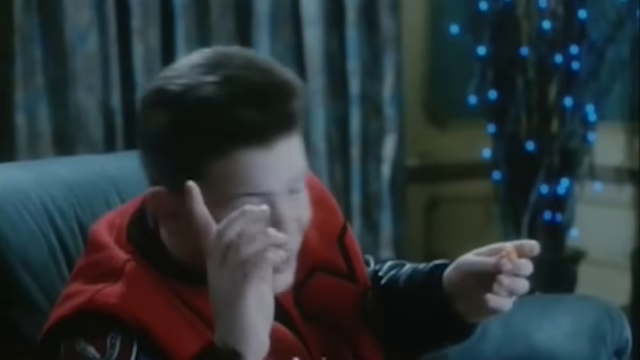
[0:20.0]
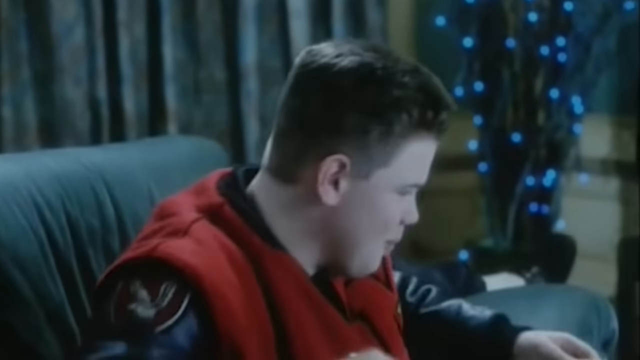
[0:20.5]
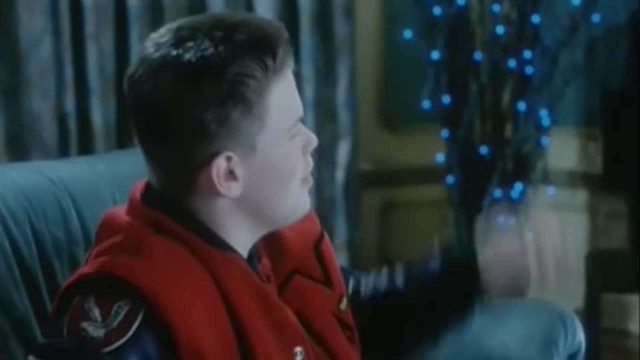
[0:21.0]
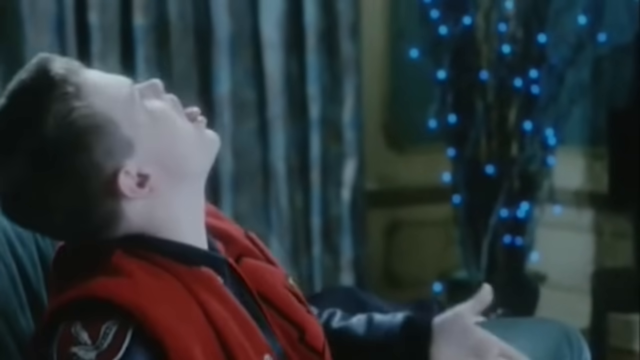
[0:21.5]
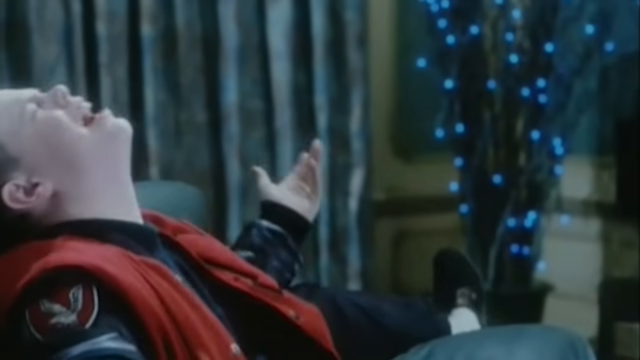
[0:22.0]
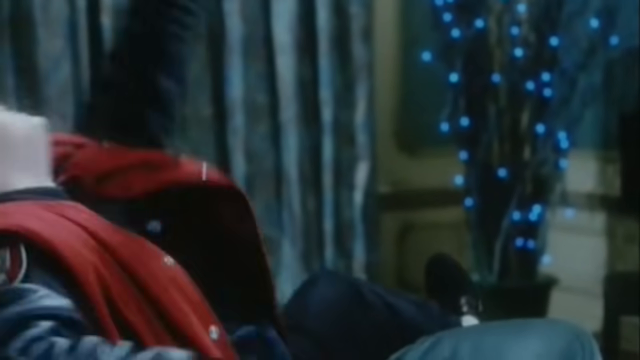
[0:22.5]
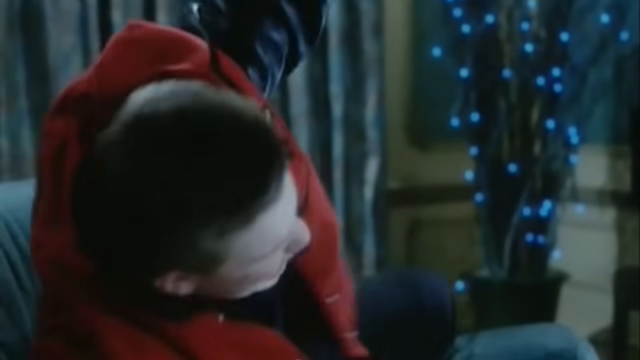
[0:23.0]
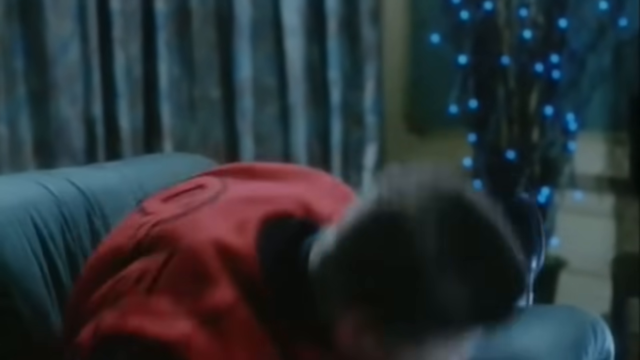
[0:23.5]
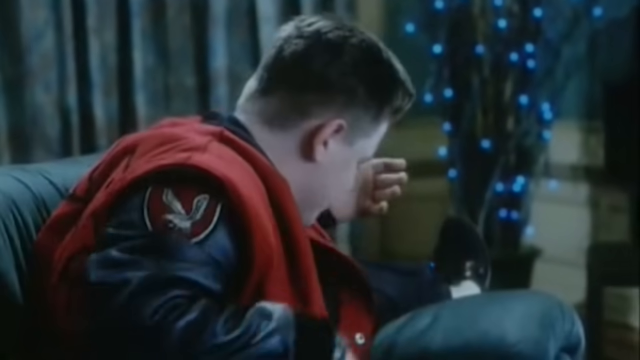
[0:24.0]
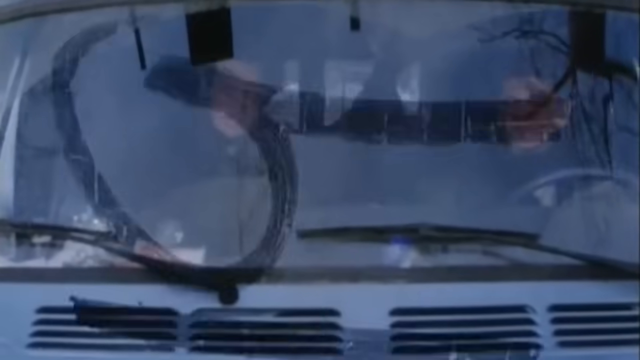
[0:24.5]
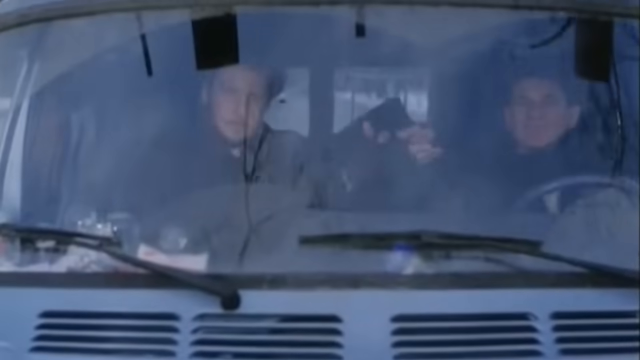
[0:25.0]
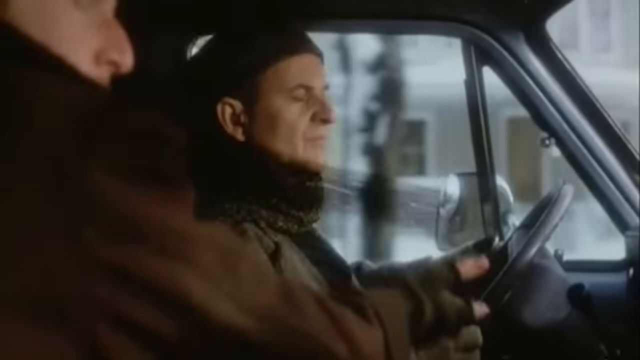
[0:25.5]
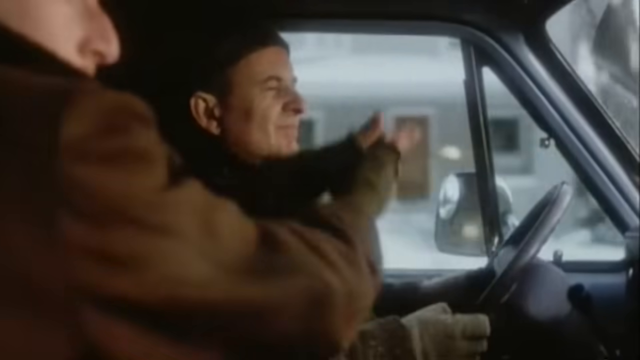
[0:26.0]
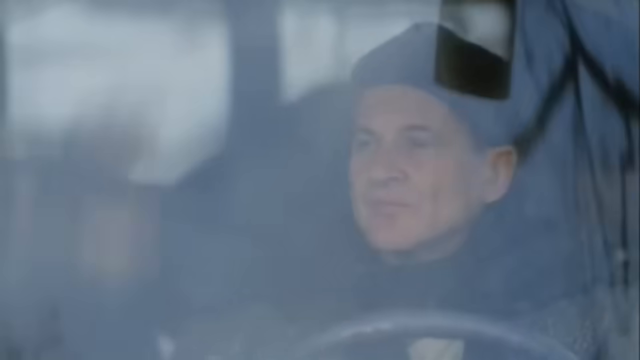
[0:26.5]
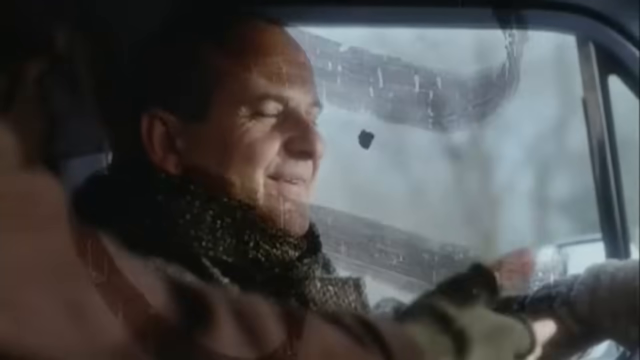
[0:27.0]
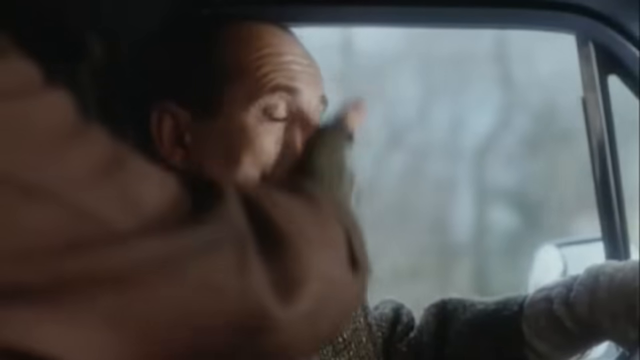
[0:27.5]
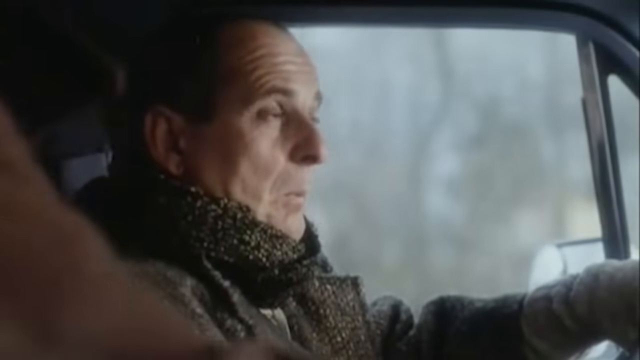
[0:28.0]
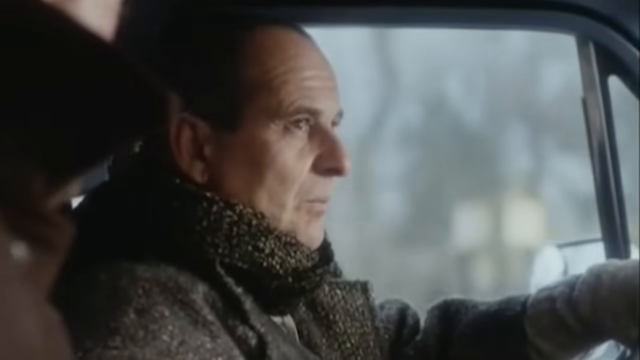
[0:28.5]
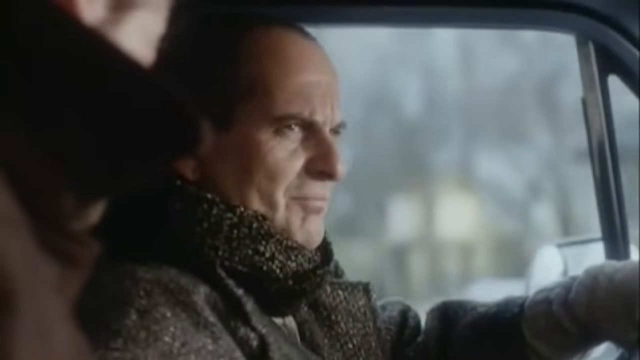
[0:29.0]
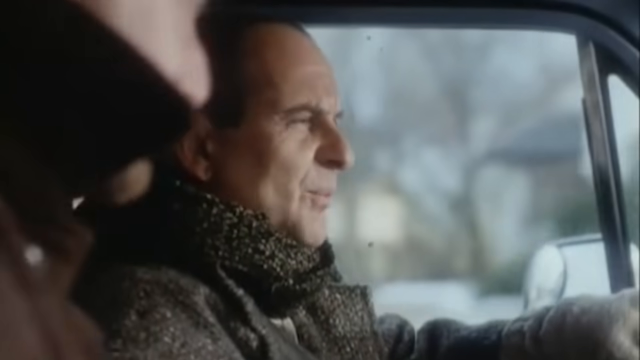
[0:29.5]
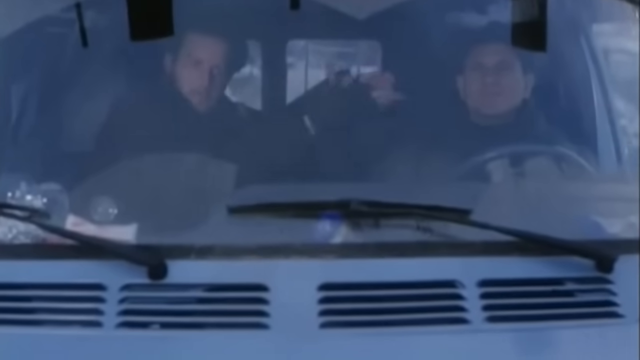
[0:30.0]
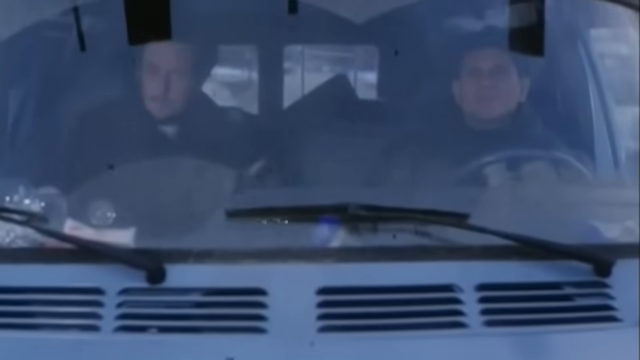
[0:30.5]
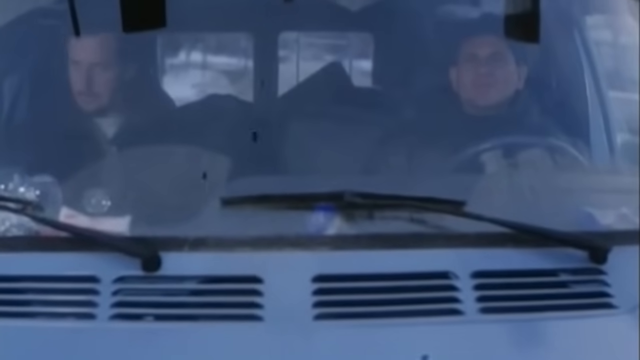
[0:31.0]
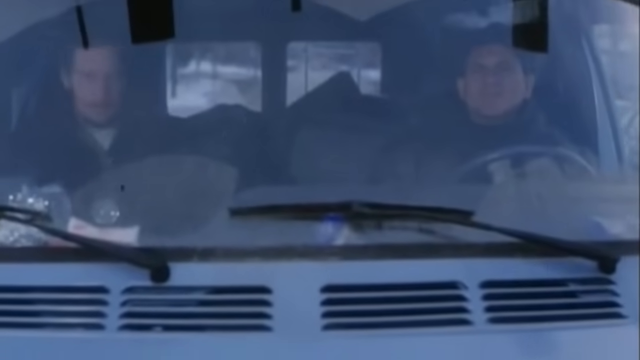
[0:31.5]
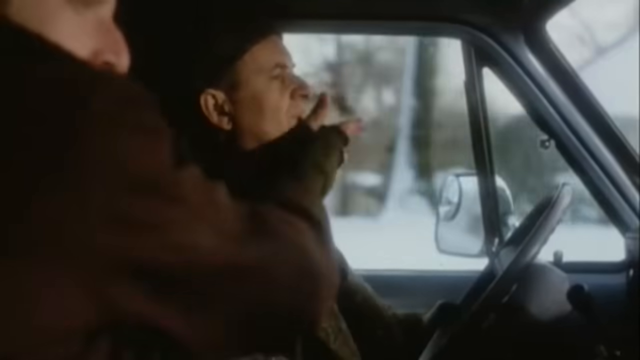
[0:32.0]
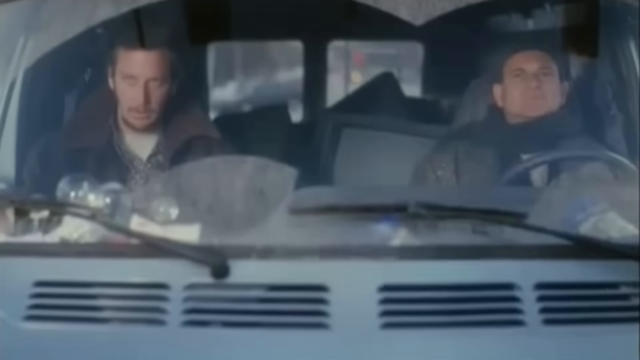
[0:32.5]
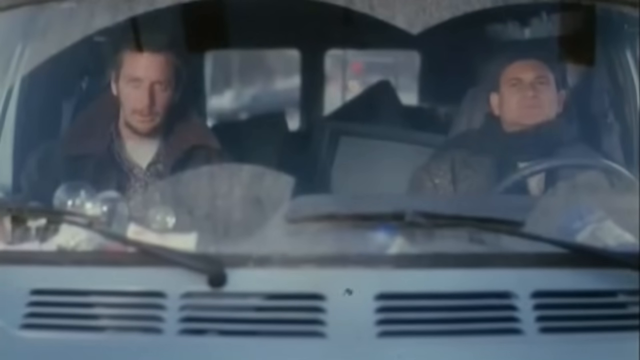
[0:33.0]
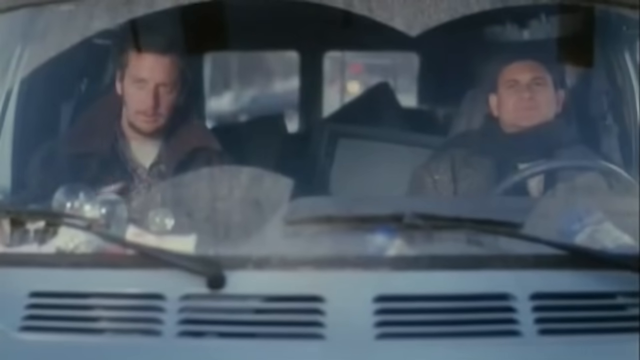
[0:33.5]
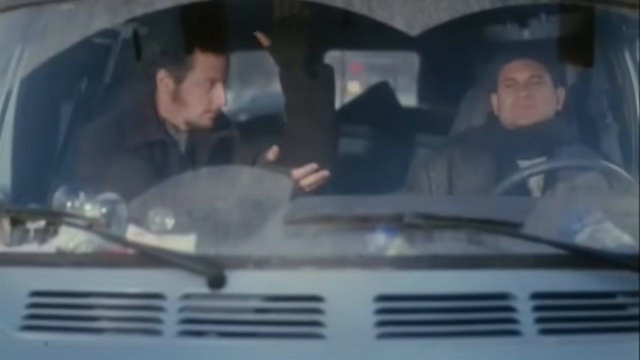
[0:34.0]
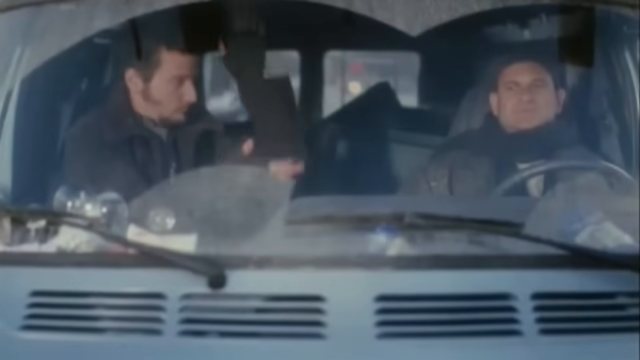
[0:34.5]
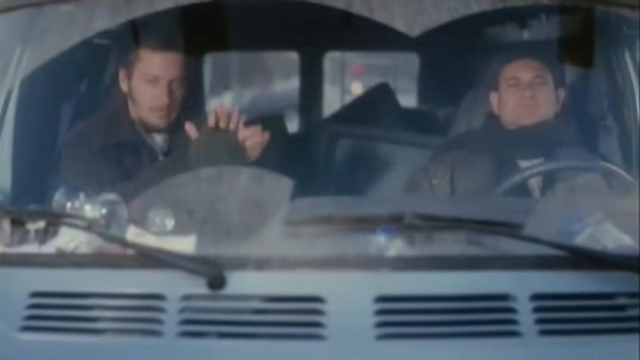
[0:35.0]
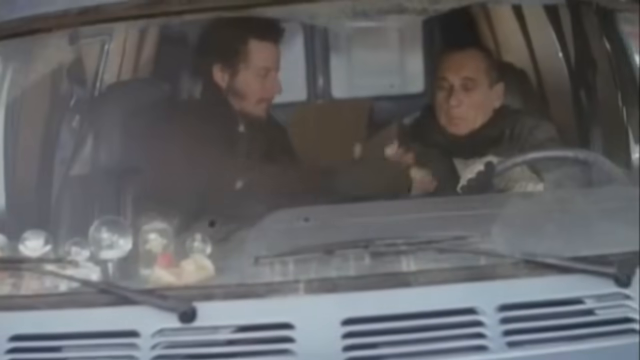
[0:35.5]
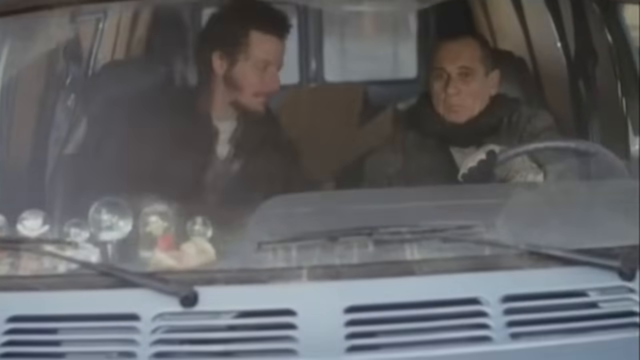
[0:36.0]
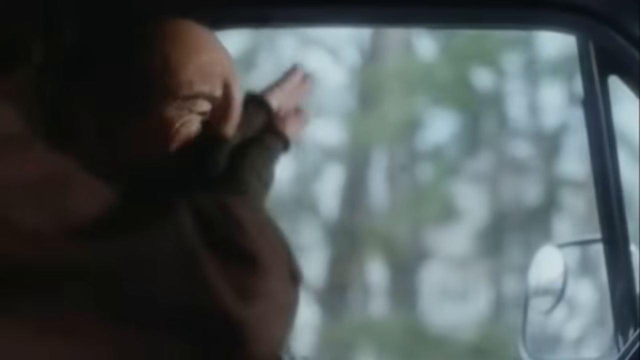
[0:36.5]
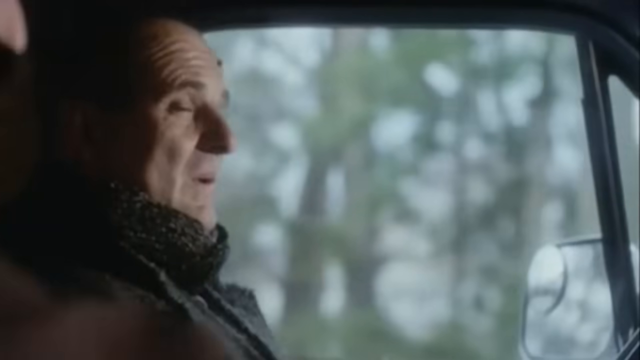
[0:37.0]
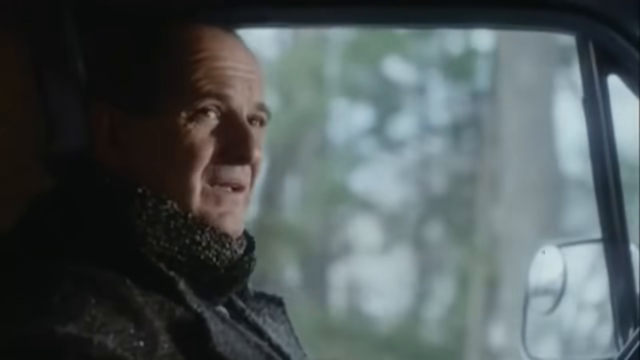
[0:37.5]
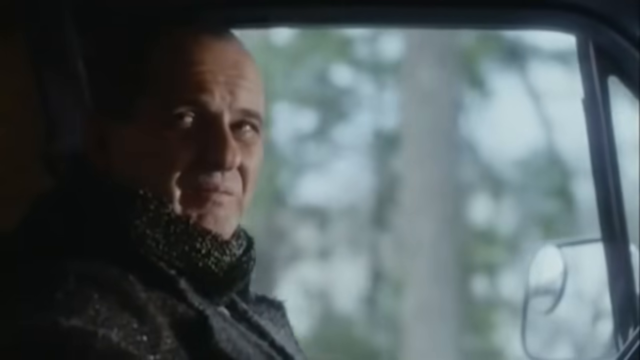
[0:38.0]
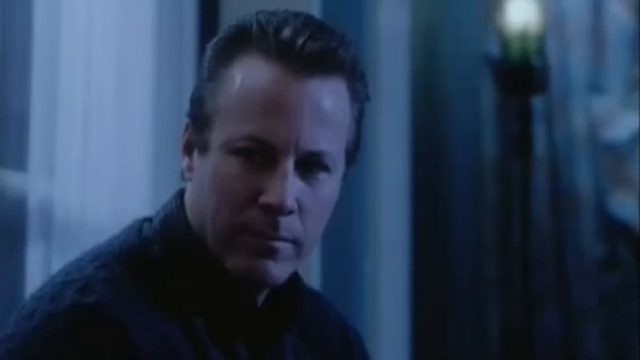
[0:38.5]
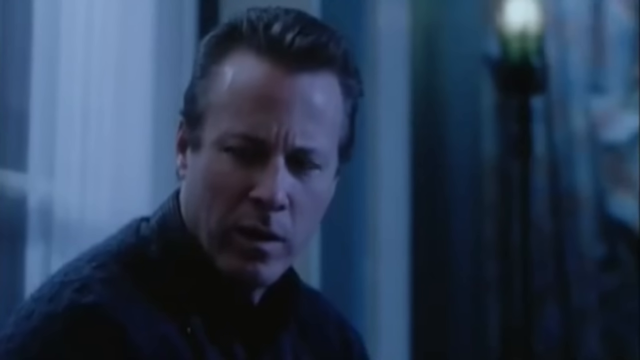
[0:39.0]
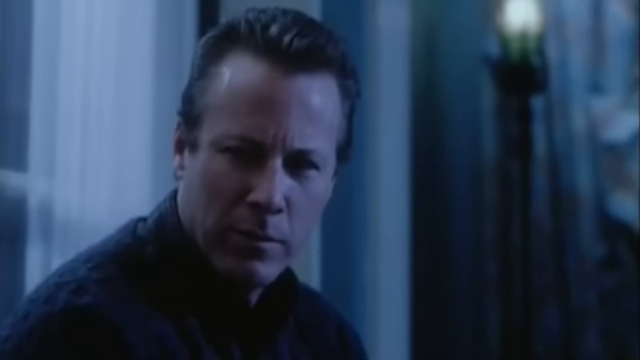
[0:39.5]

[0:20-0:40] A boy sits on a couch. Behind him is something like a Christmas tree with blue lights, a curtain is on the left, and behind the tree is a yellow wall. The guy throws his food, misses, and is really frustrated; the food is bread, and he is wearing a red jacket. Next, two thieves ride in a big bus. One of them, who has a bald forehead, is driving. They keep talking and sometimes touch their heads. Behind them are trees and a wintry landscape with snow lying on the ground.